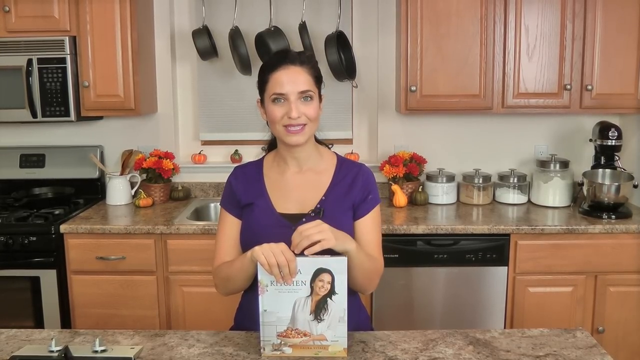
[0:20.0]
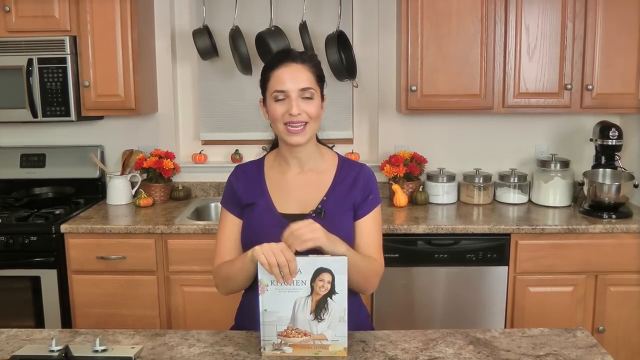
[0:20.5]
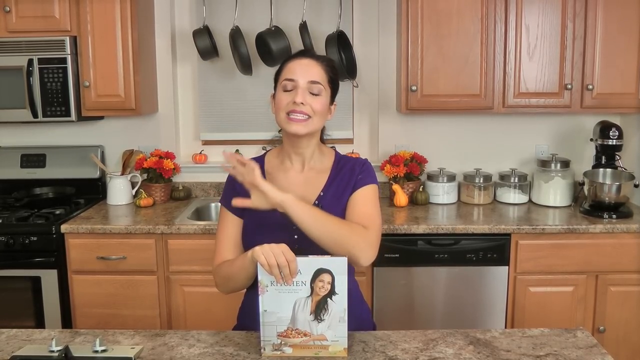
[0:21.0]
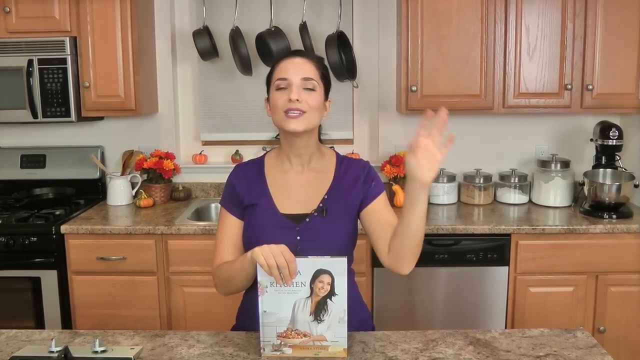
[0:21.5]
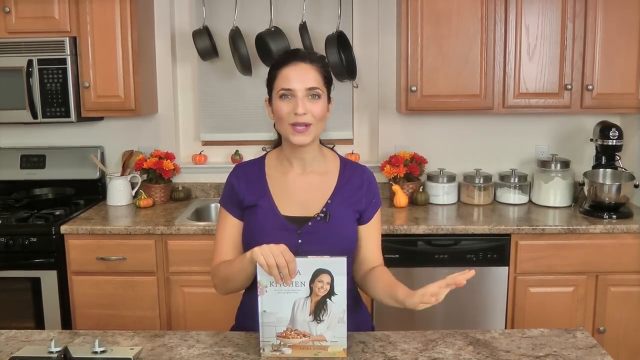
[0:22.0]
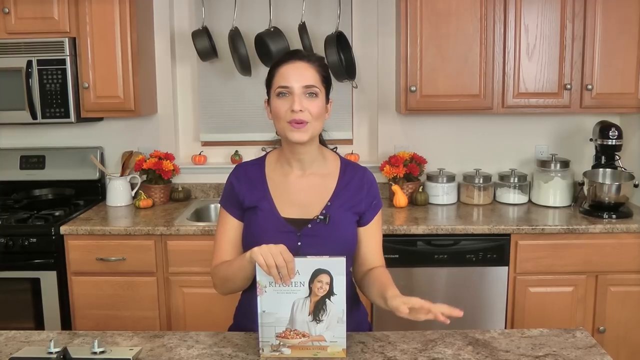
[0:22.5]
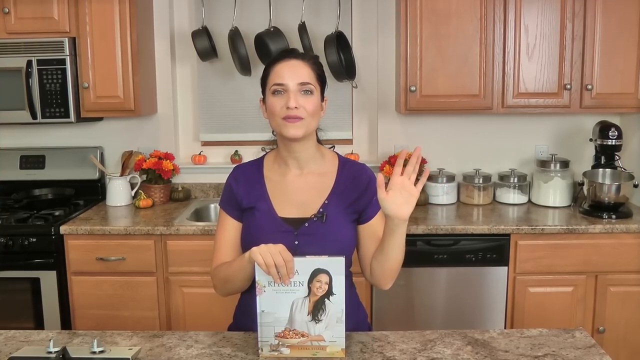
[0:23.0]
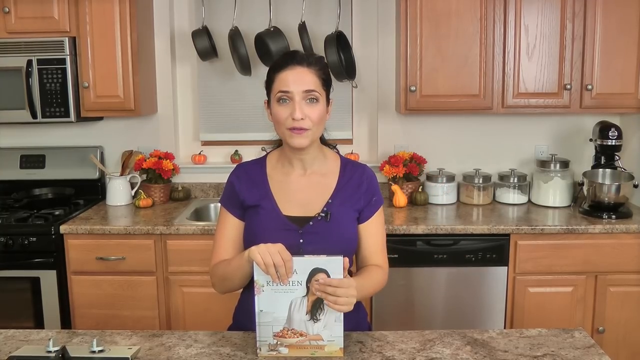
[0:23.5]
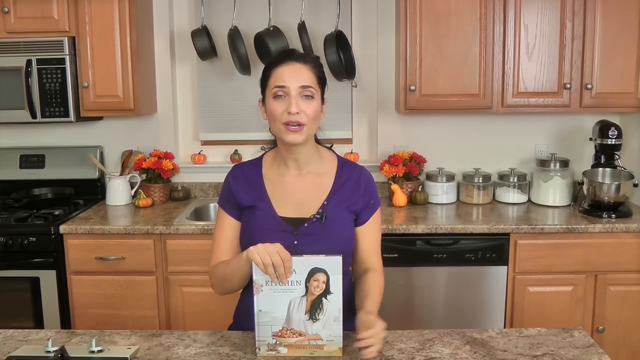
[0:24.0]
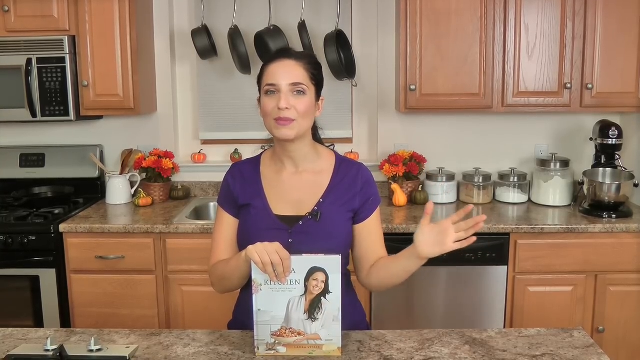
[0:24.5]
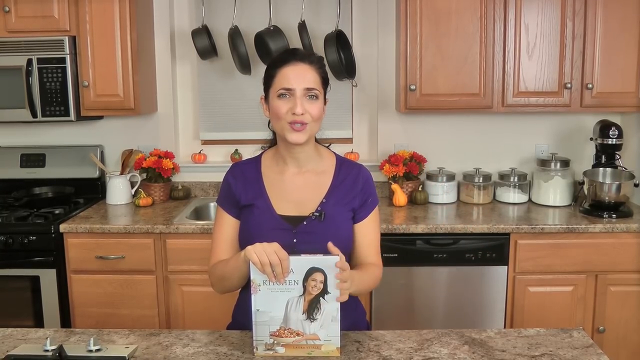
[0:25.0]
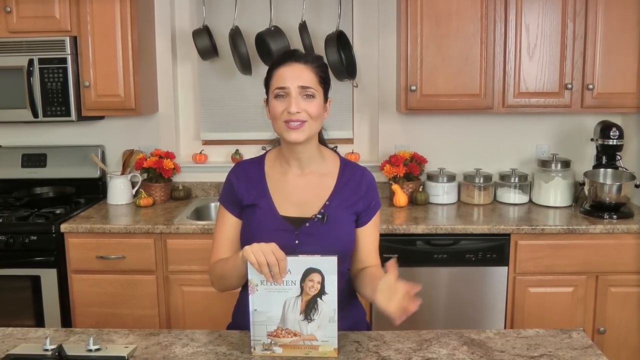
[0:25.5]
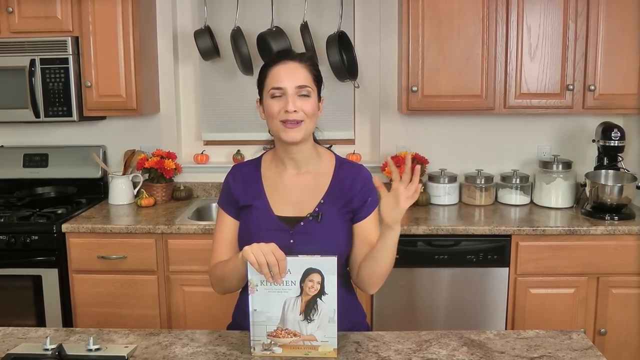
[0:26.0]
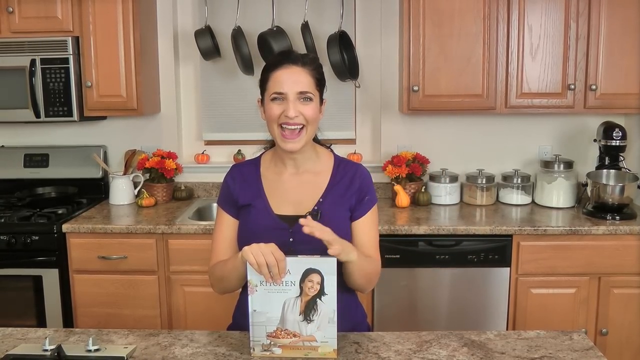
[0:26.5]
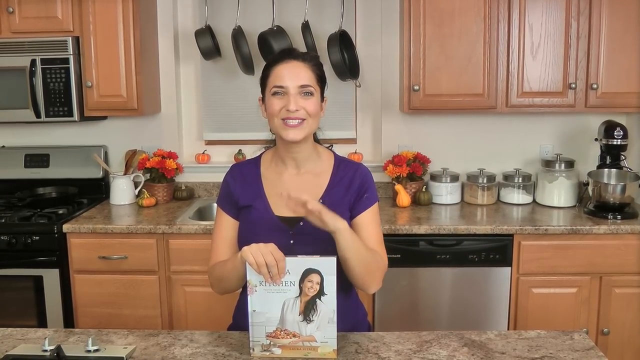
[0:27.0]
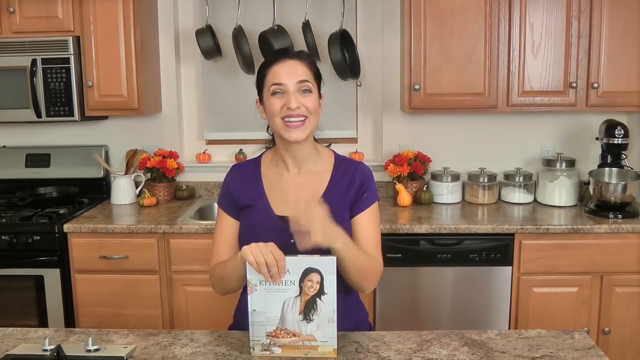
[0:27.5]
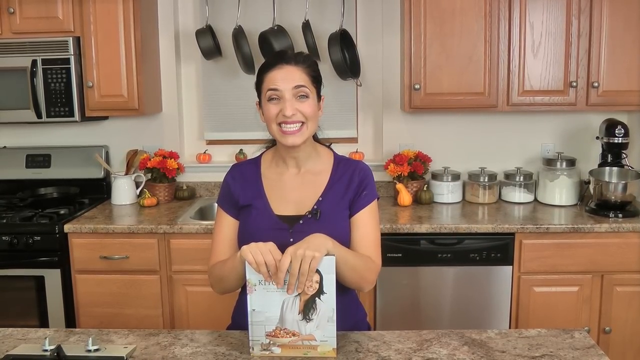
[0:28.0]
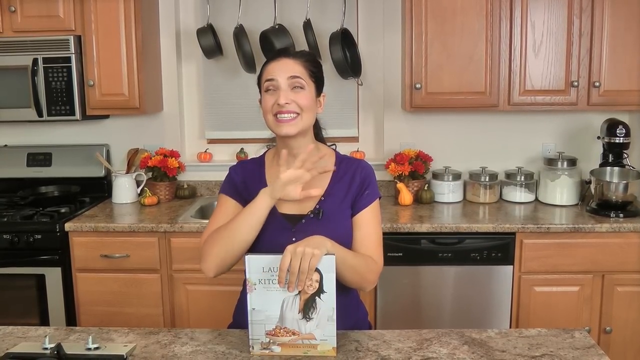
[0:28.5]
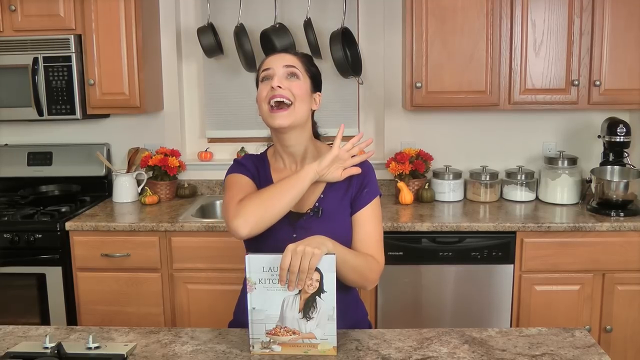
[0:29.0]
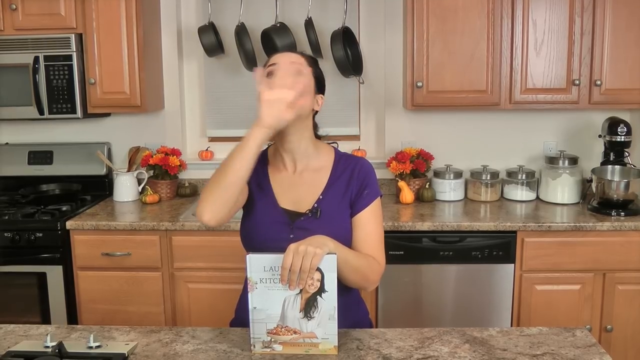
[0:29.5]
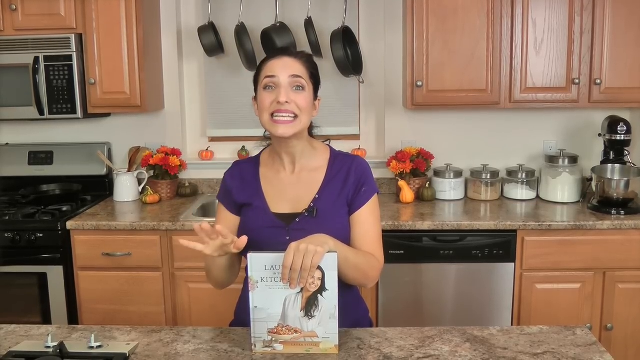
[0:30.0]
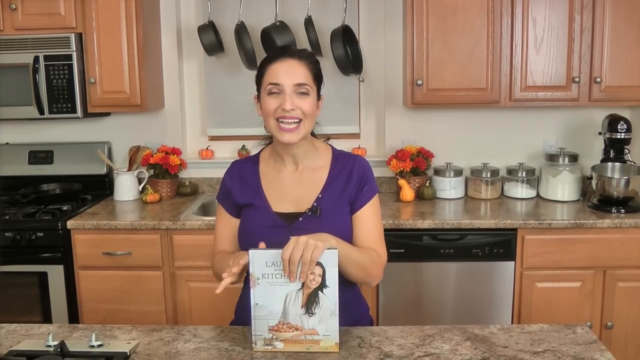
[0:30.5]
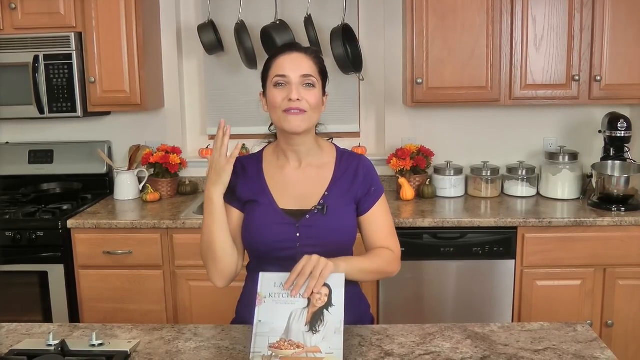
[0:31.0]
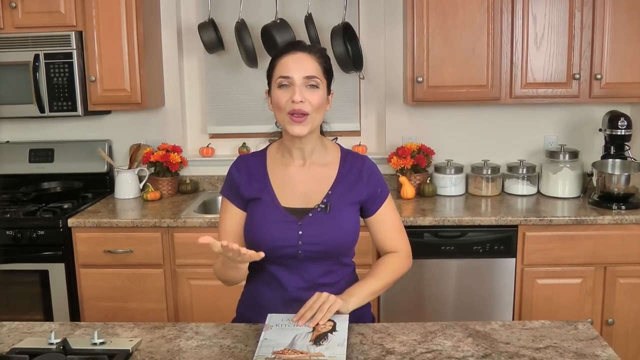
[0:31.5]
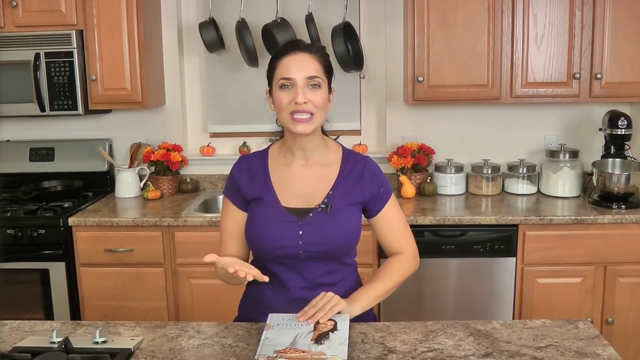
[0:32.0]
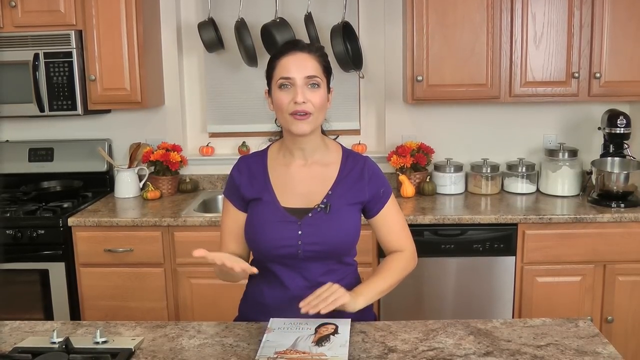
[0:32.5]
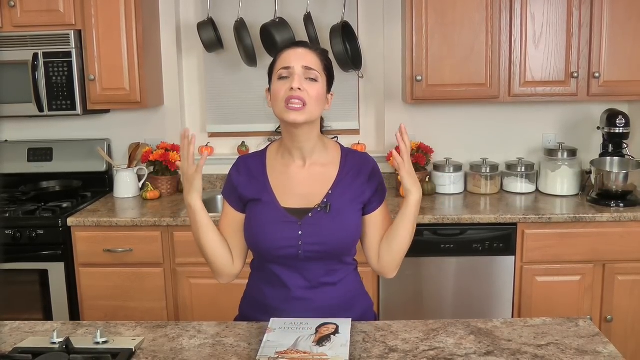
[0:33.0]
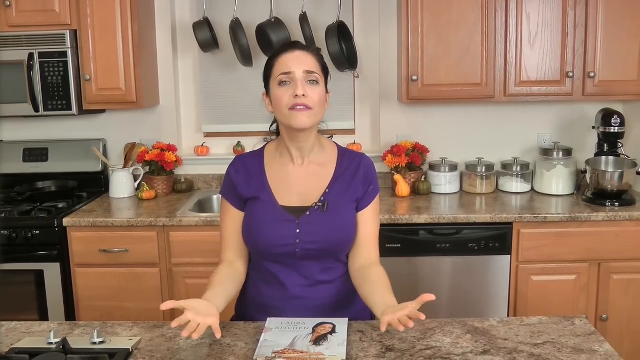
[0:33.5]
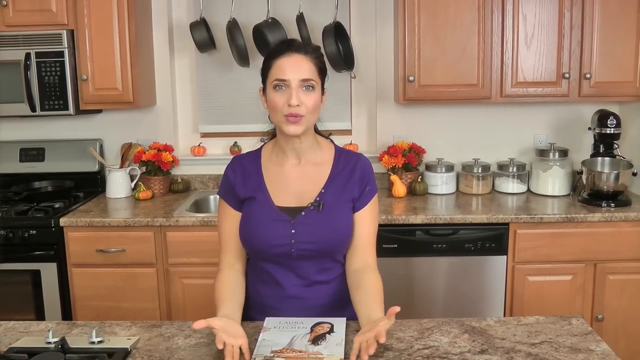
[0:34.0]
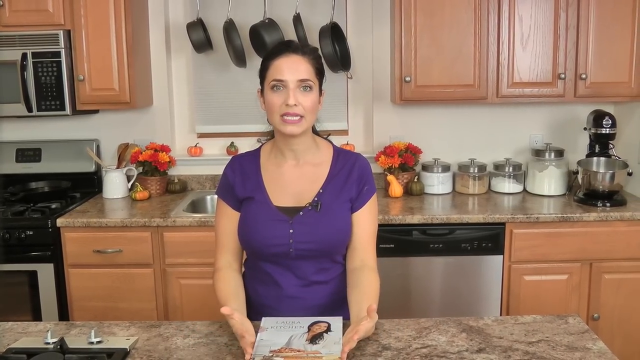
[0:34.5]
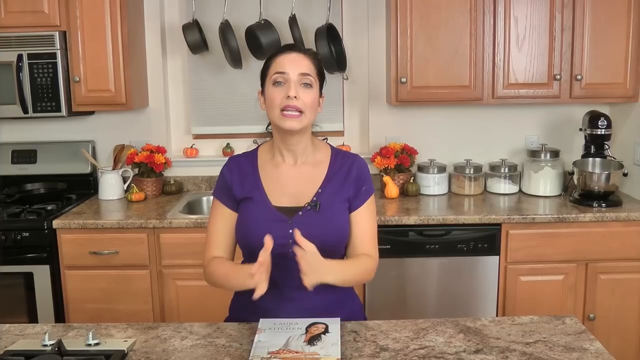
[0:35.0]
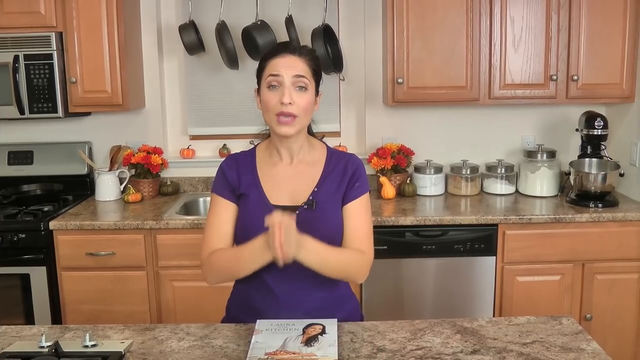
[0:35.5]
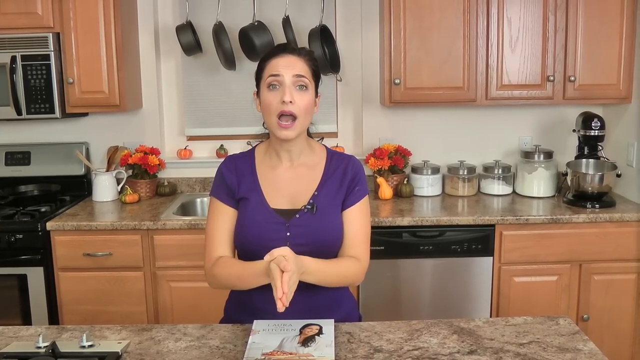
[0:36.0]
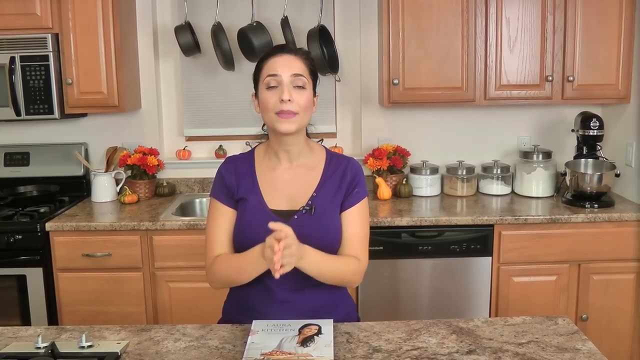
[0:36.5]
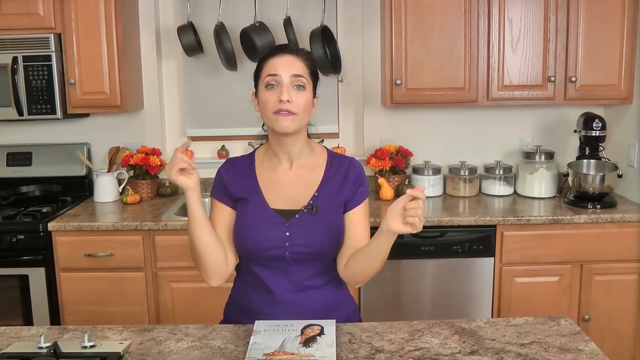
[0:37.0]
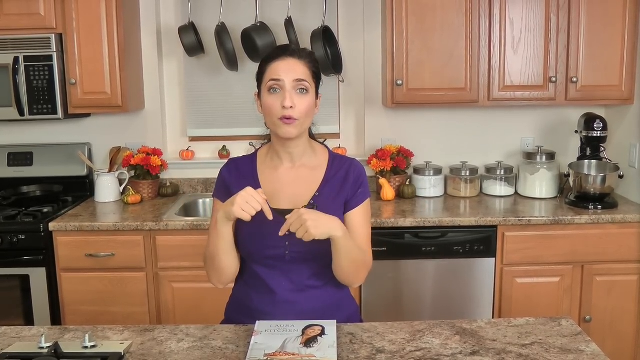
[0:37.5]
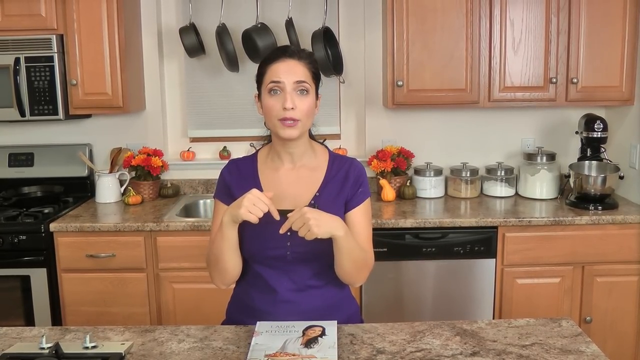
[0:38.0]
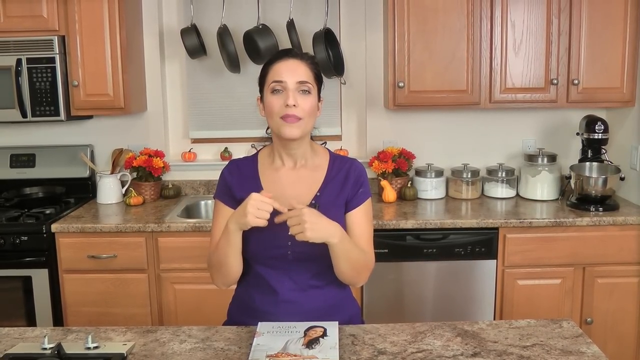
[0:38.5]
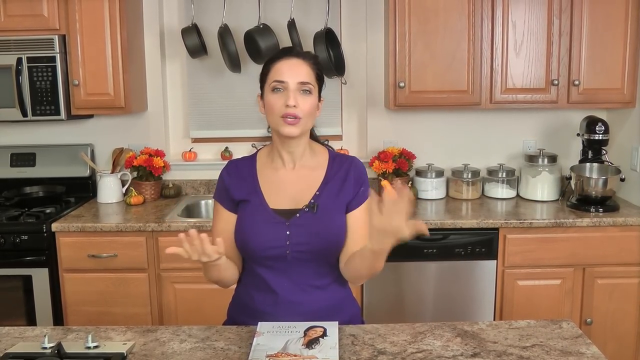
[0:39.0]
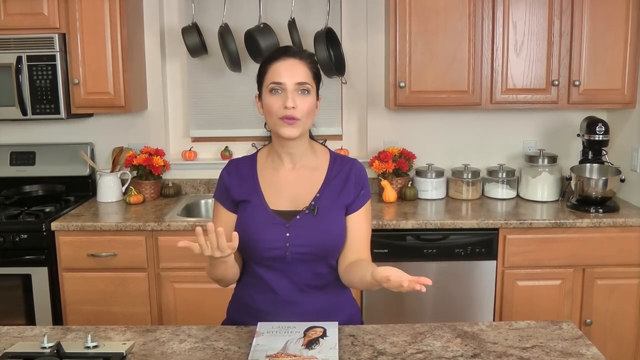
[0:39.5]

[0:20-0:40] A white woman stands in a kitchen with a stove, a microwave, a dishwasher, many spices, and a table next to the sink. Black and silver pans are on top, and the cupboards are made of brown, varnished wood. She holds a book in her hand and keeps talking while facing the camera, seeming to explain something she knows well. The book's cover shows a woman with food in front of her. She wears a purple top with black, with a microphone on the top next to her chest, and has black hair at the back. She looks about 35 or 36 years old, a grown woman.